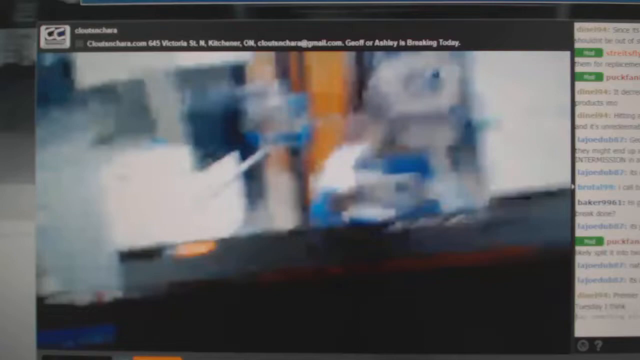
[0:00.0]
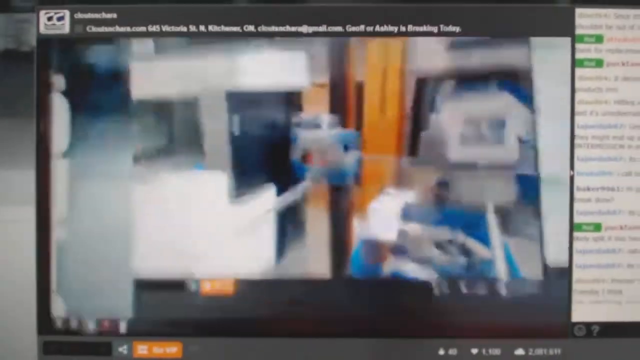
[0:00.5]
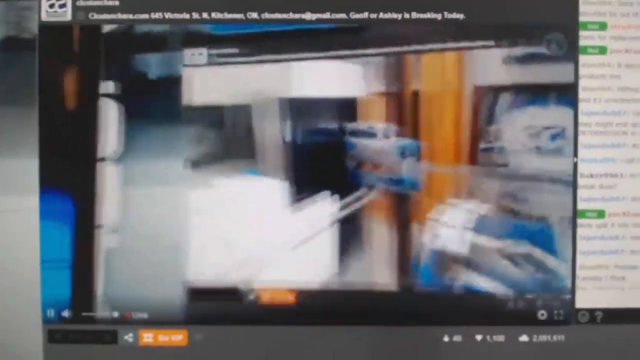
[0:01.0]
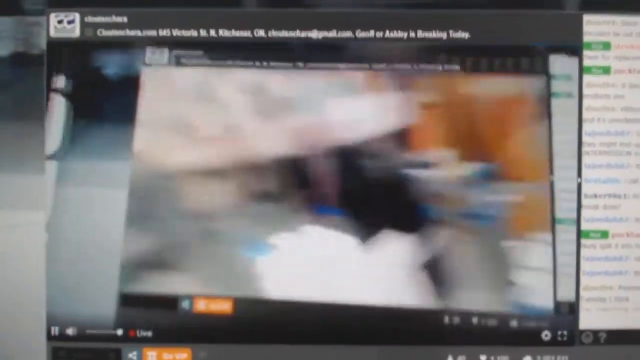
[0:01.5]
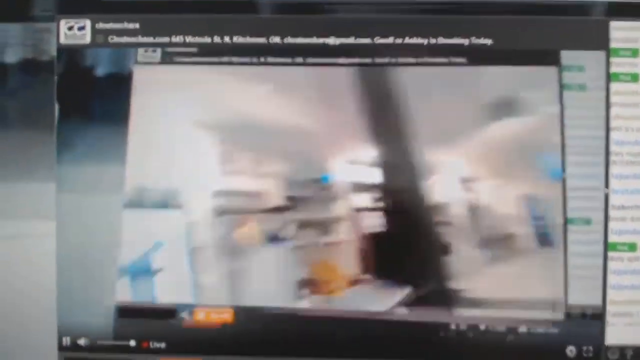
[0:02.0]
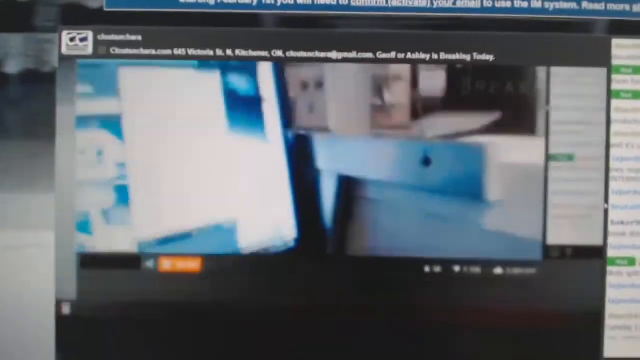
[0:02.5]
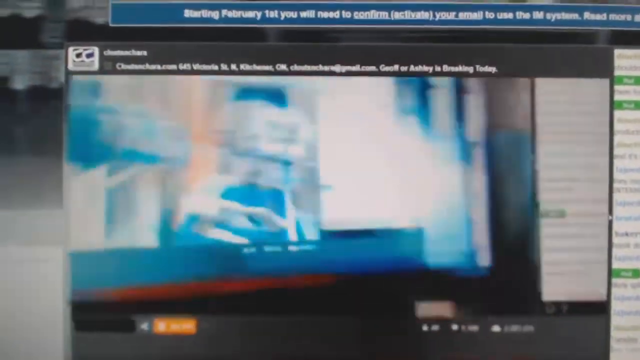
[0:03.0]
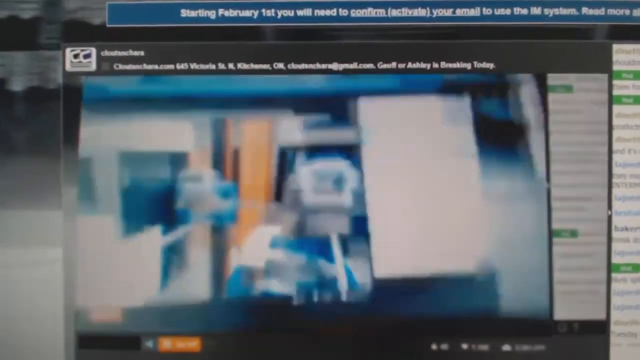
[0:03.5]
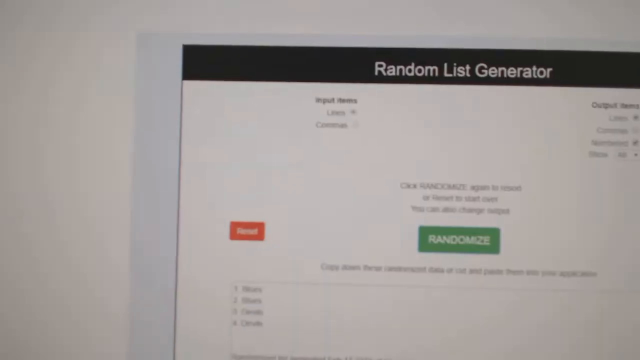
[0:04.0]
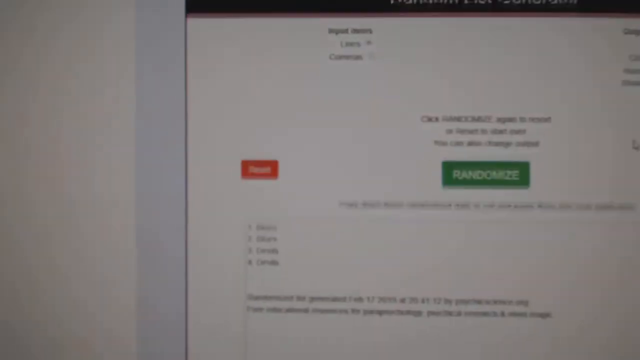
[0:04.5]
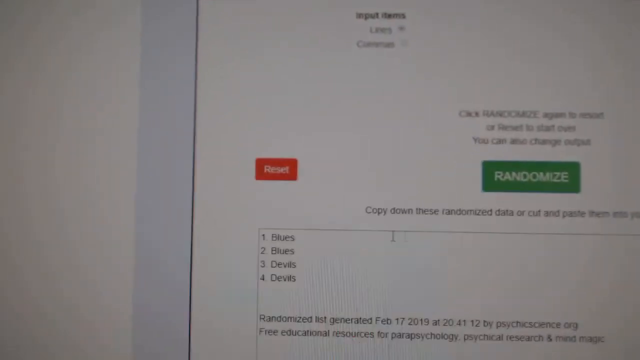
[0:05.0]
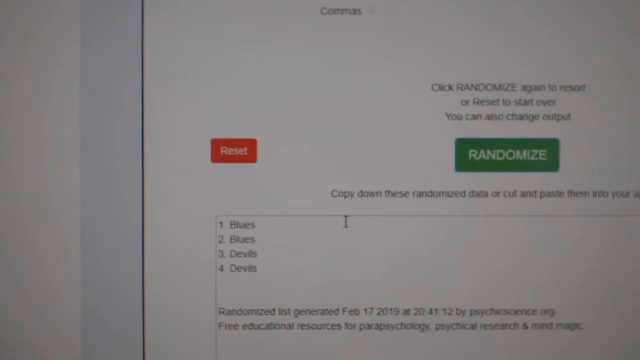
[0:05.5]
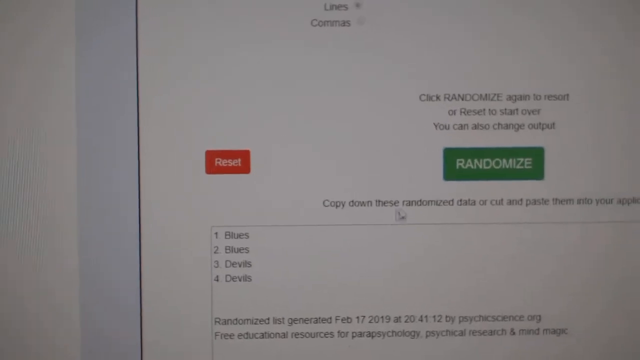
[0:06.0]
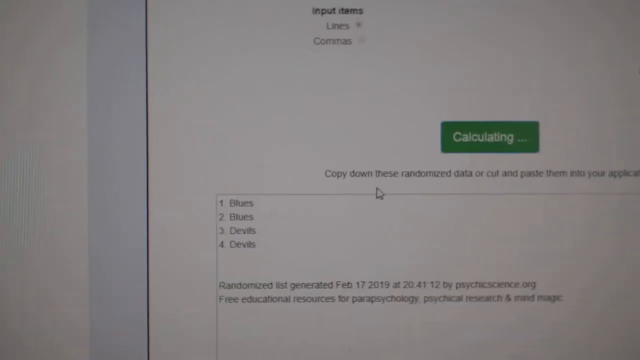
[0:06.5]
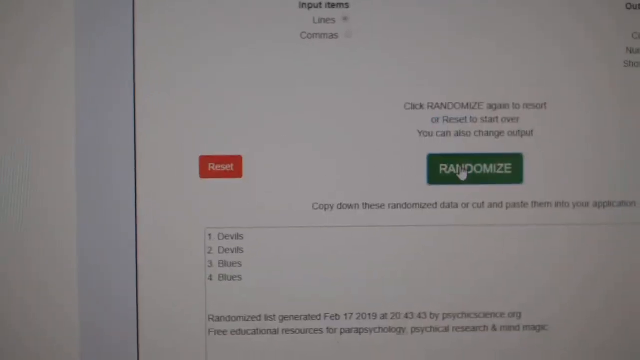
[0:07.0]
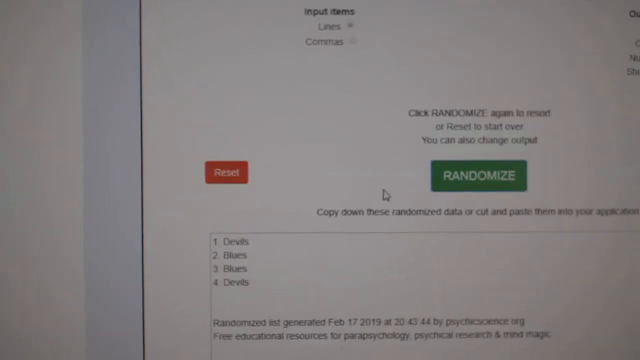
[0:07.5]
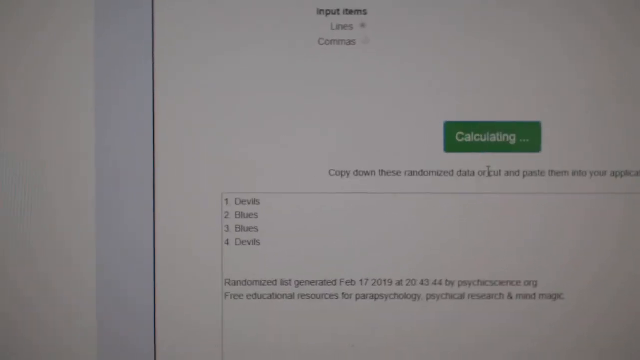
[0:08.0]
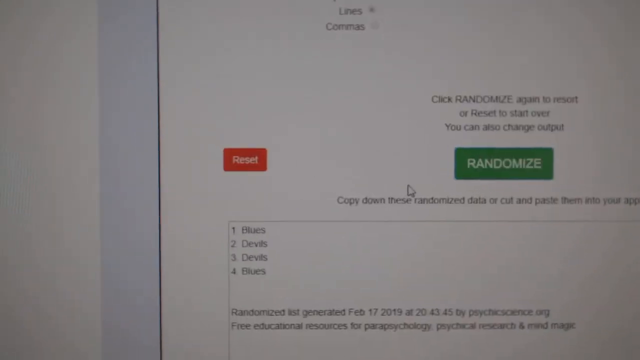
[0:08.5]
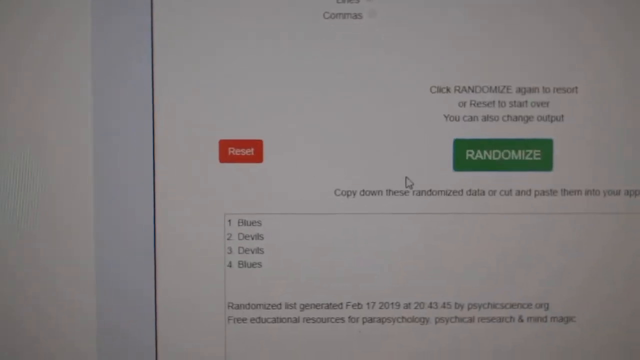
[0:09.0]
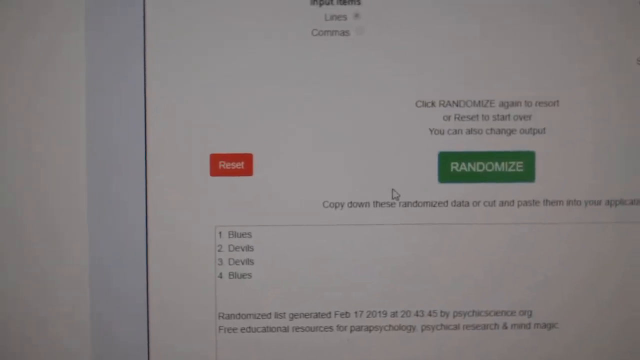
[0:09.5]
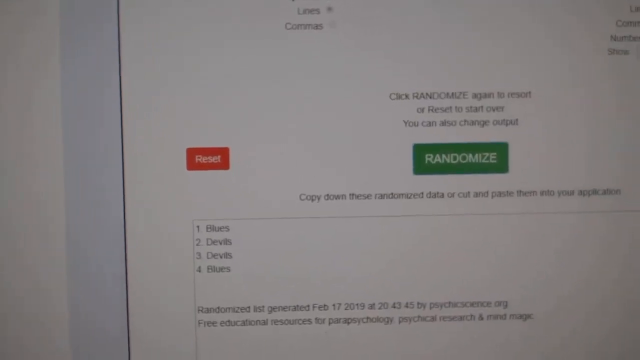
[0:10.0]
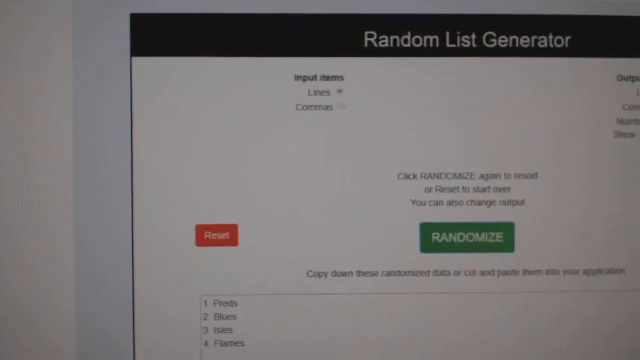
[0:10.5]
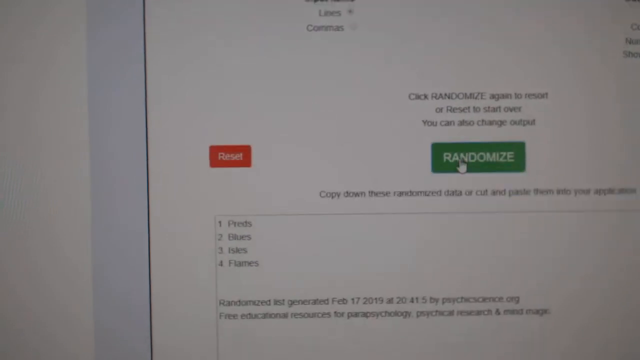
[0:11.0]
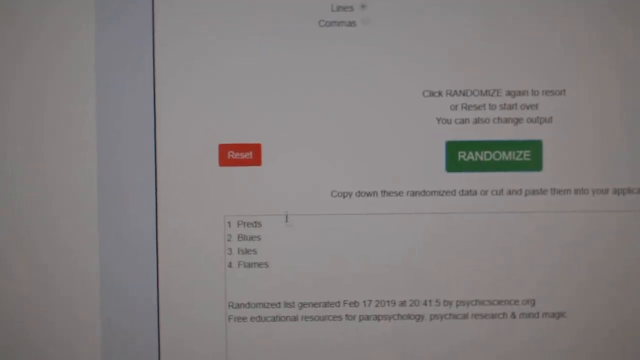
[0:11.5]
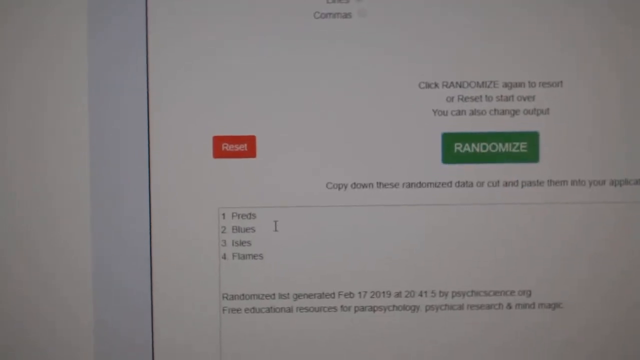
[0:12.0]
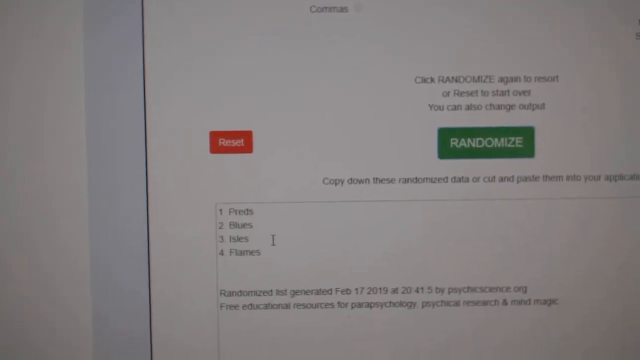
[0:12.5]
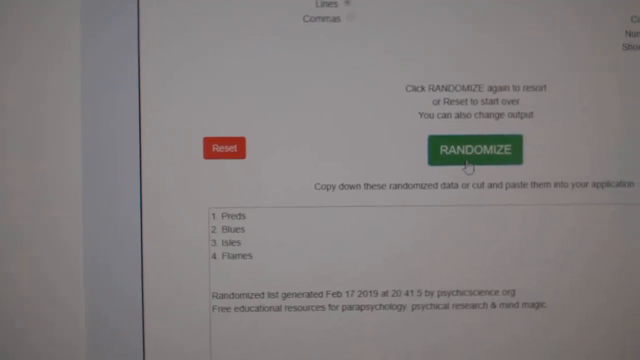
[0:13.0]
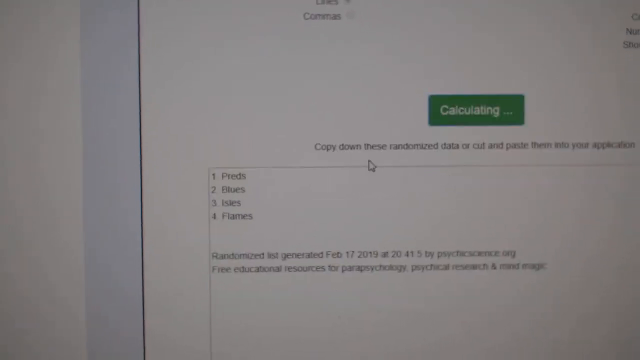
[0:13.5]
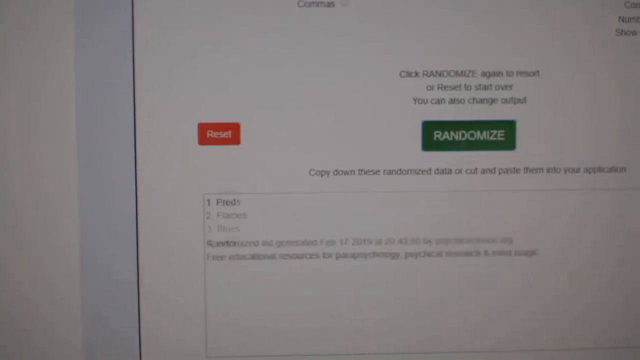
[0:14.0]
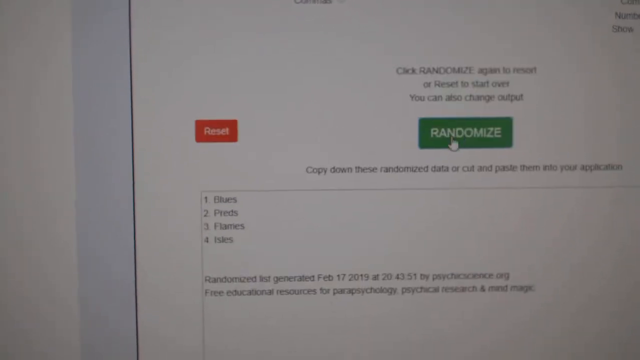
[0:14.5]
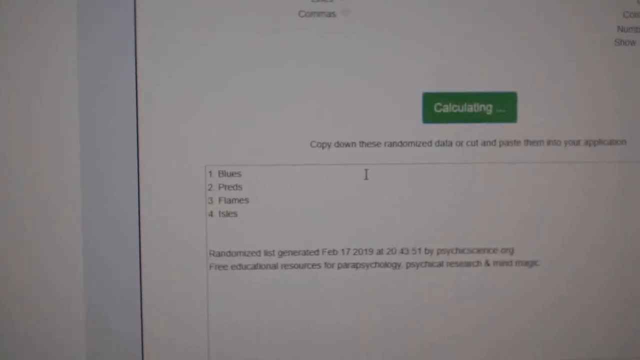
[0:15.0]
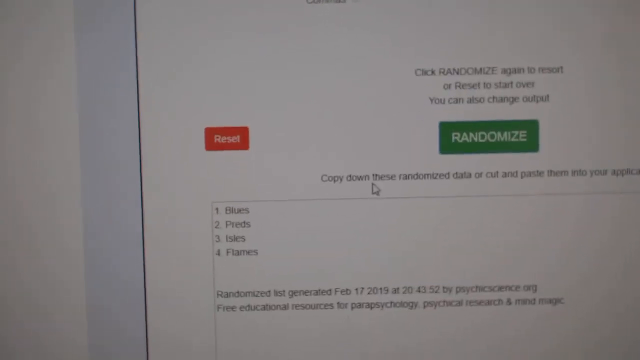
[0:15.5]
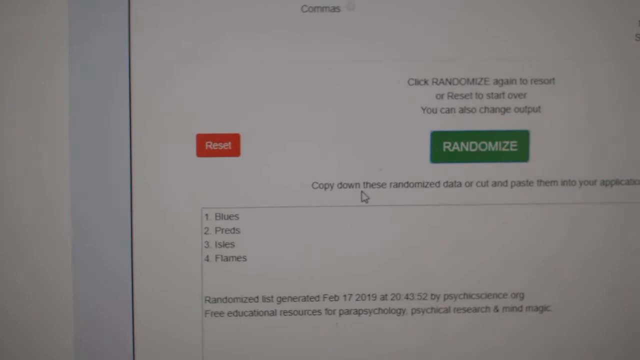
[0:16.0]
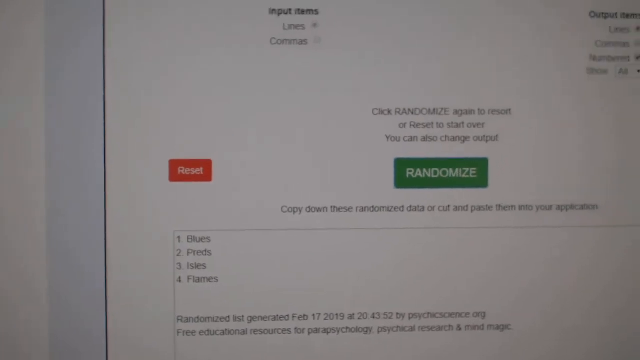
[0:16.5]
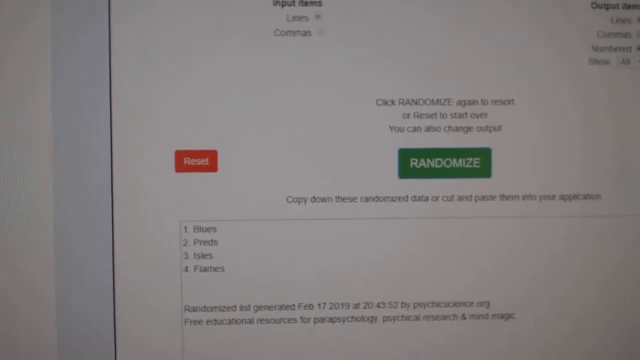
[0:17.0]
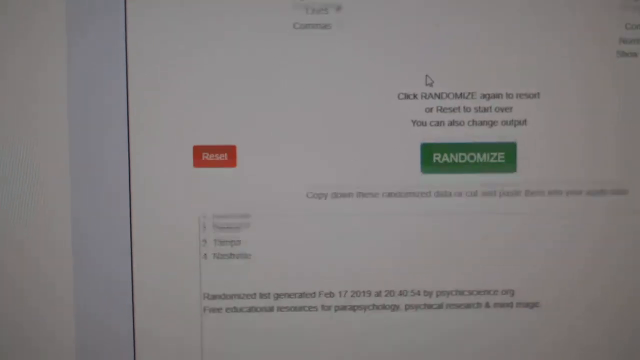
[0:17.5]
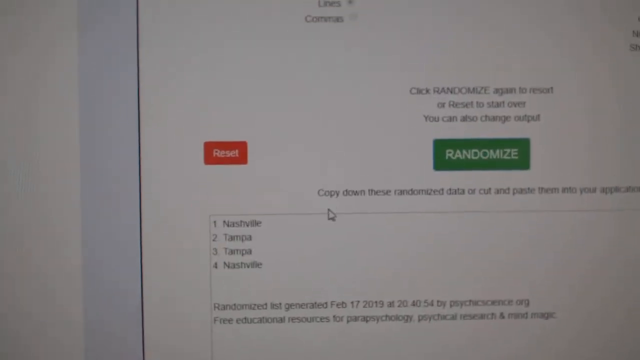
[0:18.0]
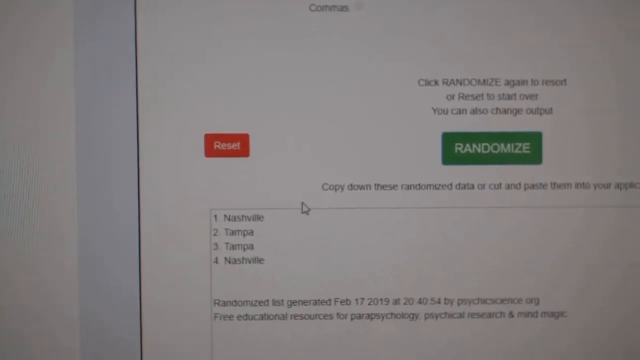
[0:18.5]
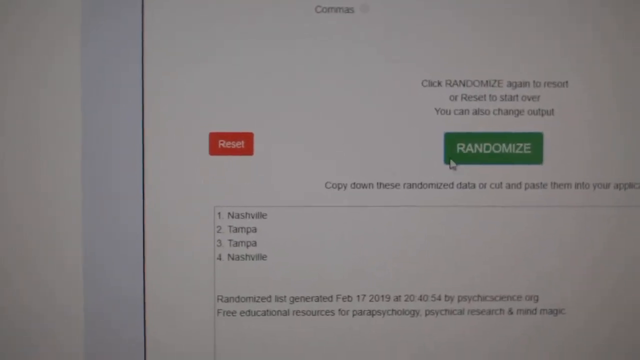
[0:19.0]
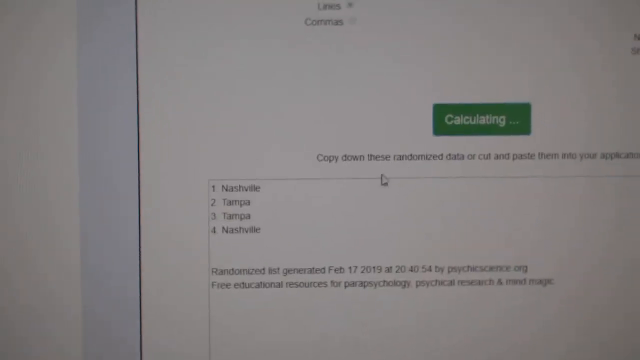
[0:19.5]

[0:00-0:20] A shaky phone recording captures a desktop screen that is showing a video, which is also shaky, and it is not clear what that video shows. The next shot, also recorded by phone from the desktop screen, shows a random list generator. Its text box is populated with four options: the first two read "blues" and the last two read "devils". The user clicks the green "randomize" button, and the values swap order to devils, devils, blues, blues. This continues until the actual values change: instead of devils and blues, the list reads "one, preds, two, blues, three, aisles, and four, flames". They click the Randomize button a few more times before the values change again, showing Nashville, Tampa, Tampa, Nashville.